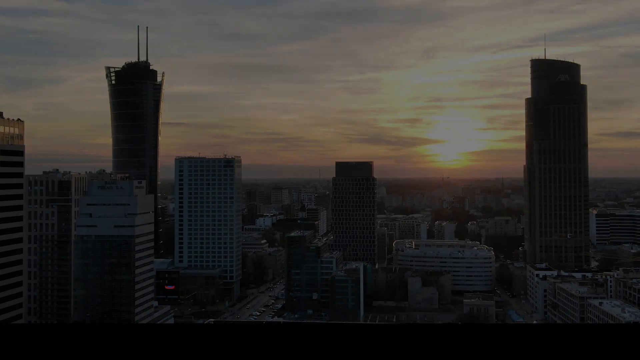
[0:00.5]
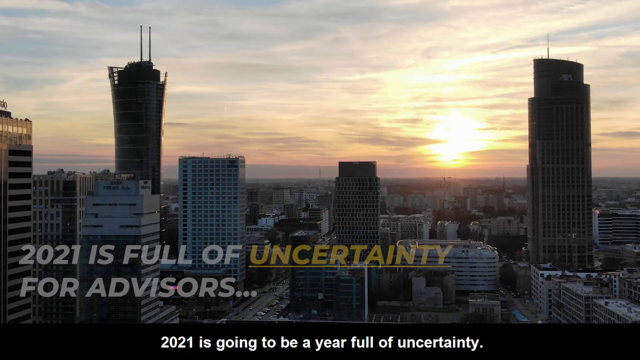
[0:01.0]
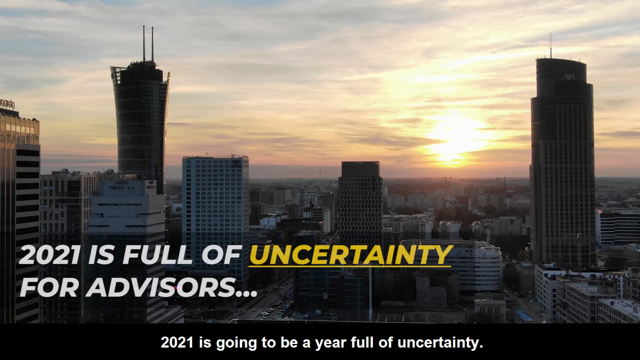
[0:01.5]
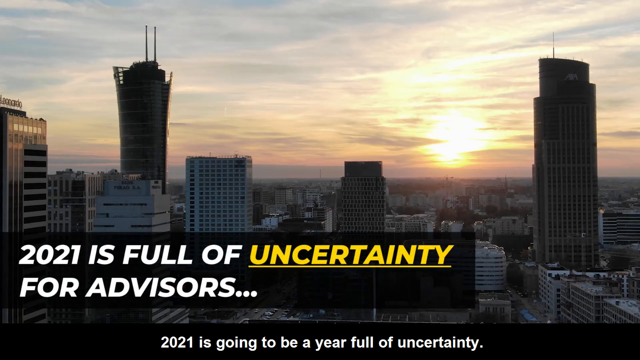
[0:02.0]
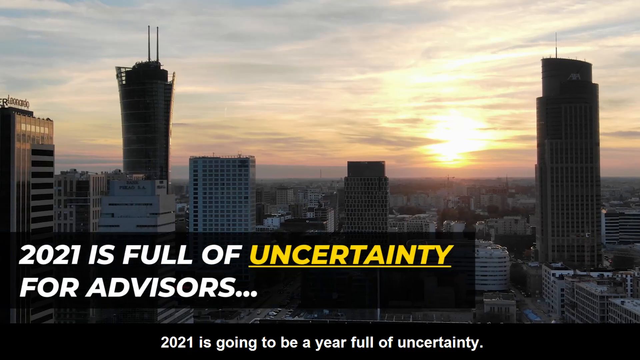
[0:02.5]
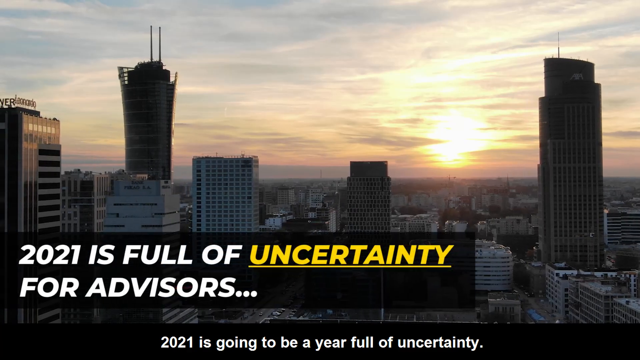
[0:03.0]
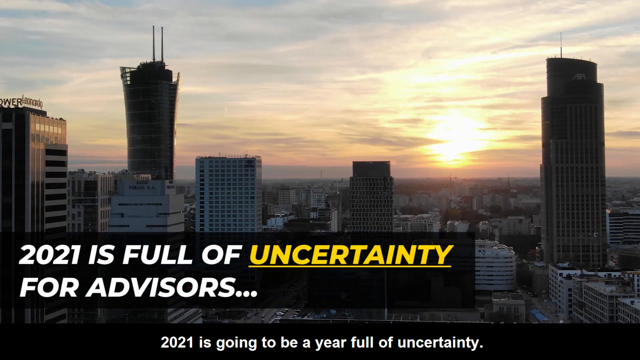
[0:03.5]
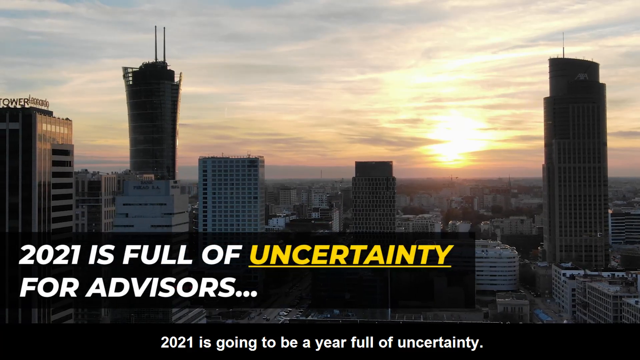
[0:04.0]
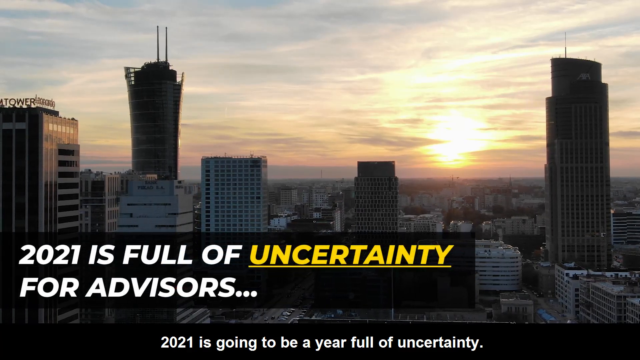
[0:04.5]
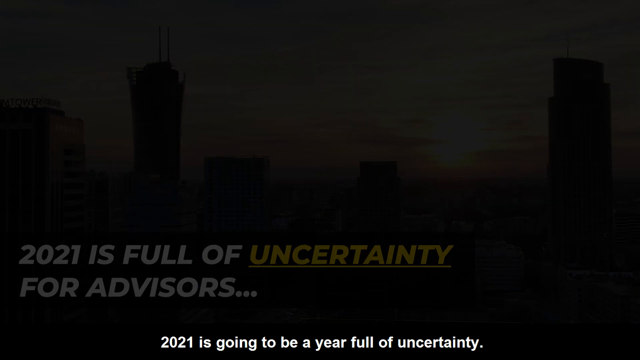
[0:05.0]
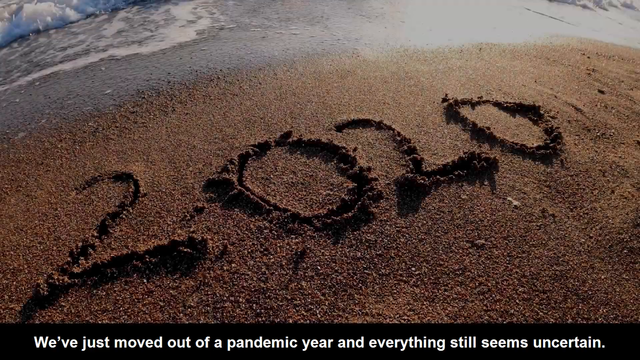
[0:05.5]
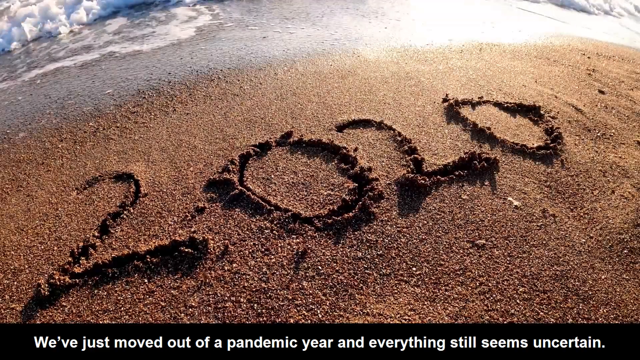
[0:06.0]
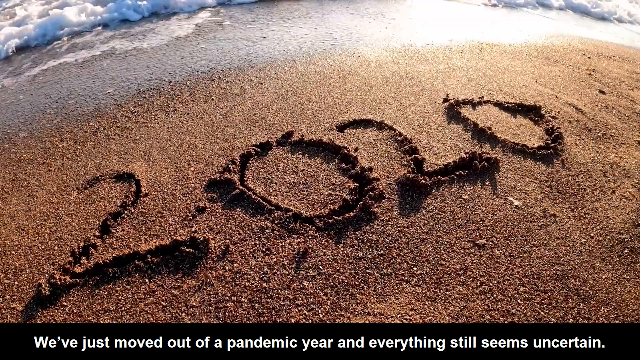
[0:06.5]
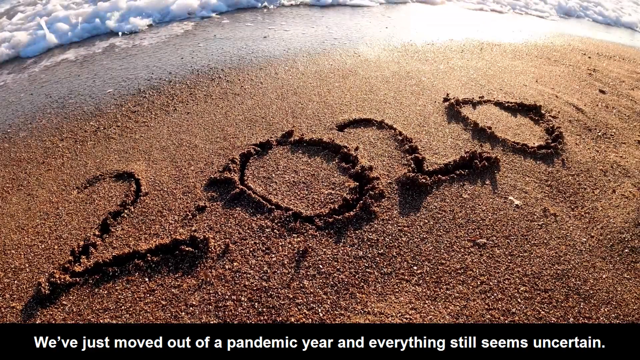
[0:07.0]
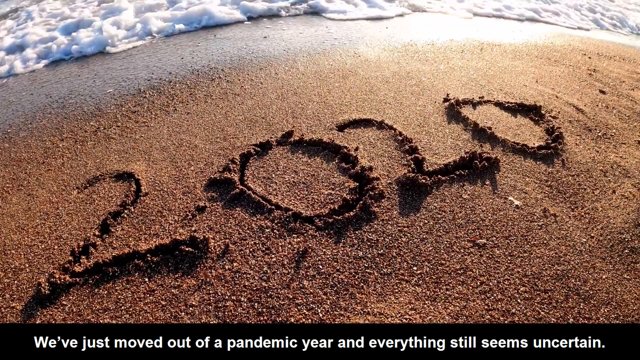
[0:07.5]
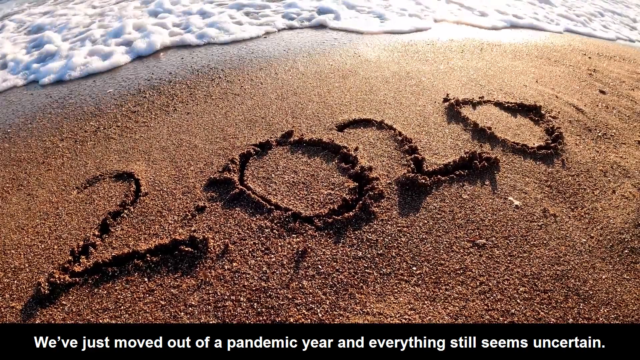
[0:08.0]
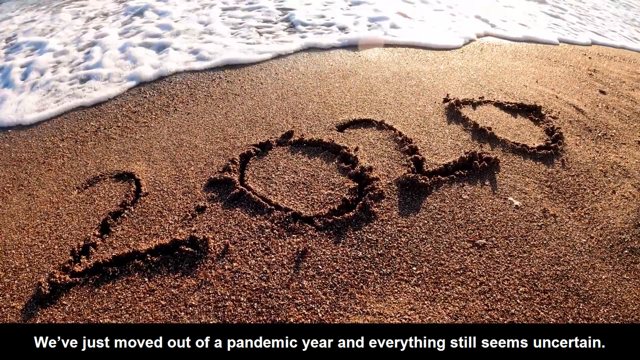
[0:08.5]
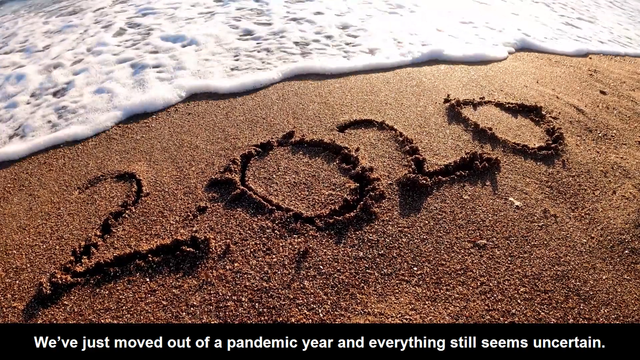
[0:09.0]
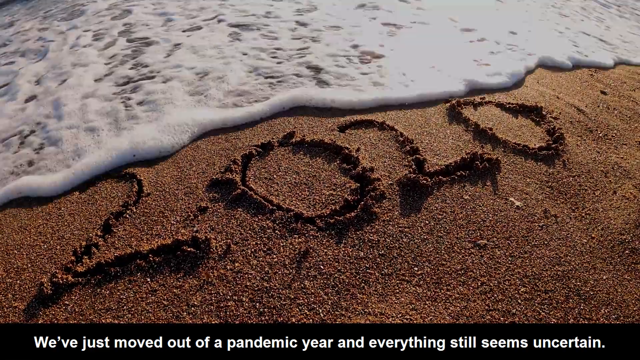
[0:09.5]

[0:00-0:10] A city skyline appears, either at sunset or sunrise, with the sun on the horizon. The camera pans over the city, showing multiple skyscrapers and buildings. Text at the bottom of the screen reads "2021 is going to be a year full of uncertainty." The next screen shows the year 2020 etched into the sand at a beach, with the text "we've just moved out of pandemic year and everything still seems uncertain." Water from the ocean rolls in over the sand.